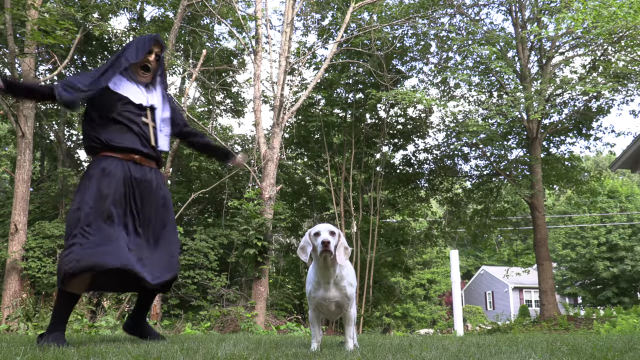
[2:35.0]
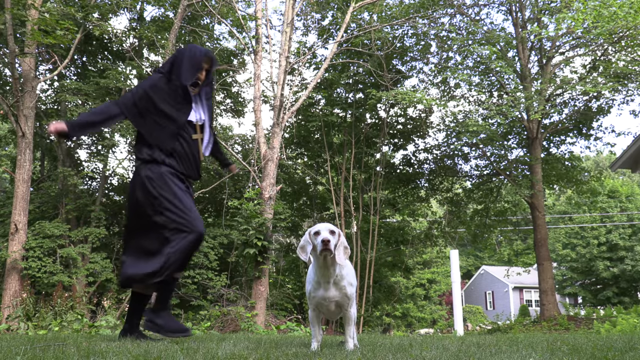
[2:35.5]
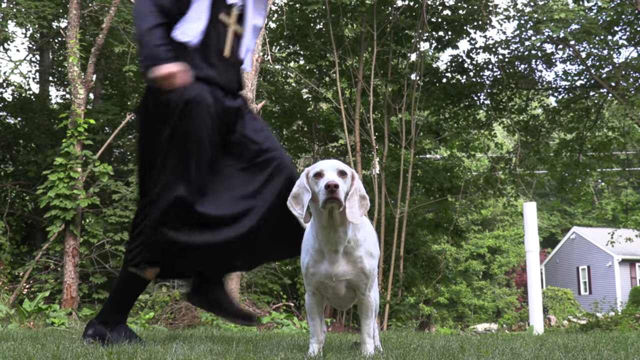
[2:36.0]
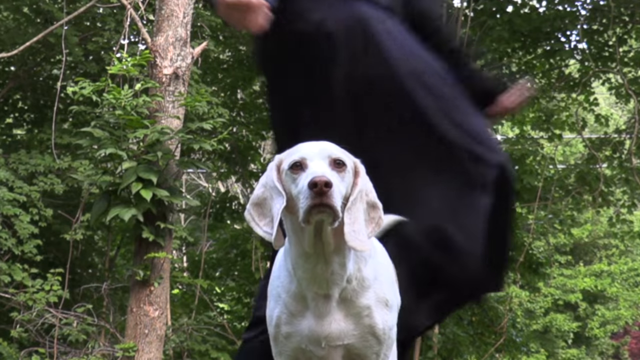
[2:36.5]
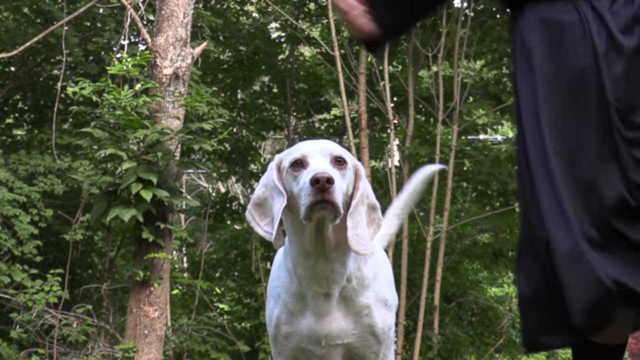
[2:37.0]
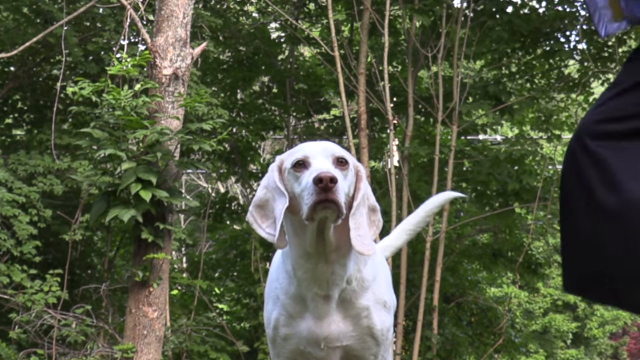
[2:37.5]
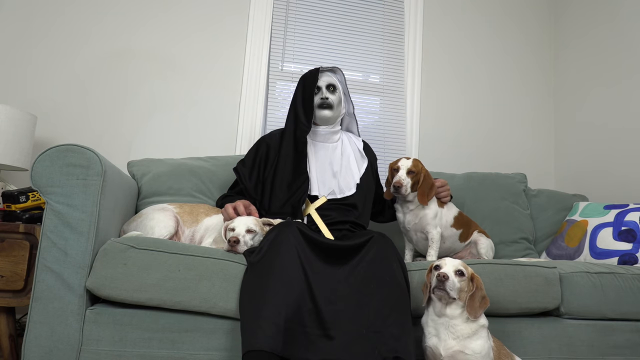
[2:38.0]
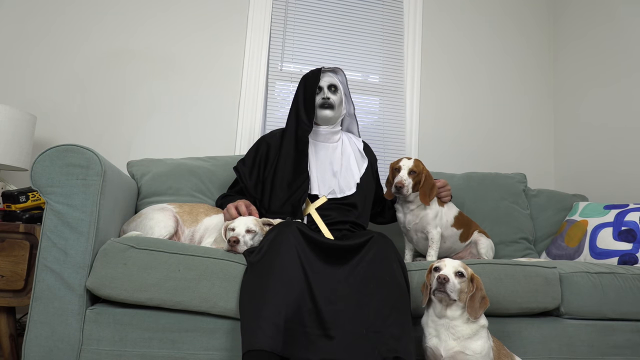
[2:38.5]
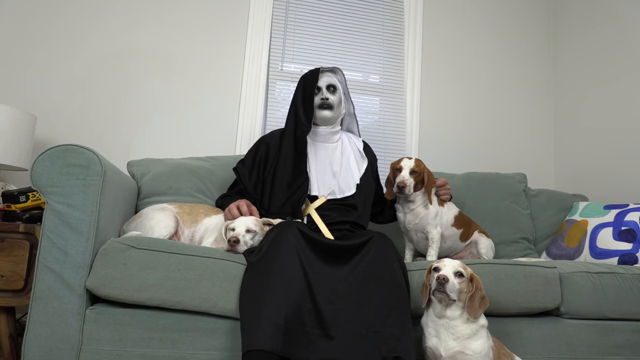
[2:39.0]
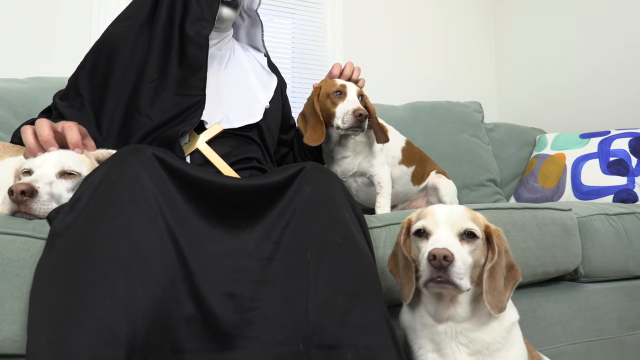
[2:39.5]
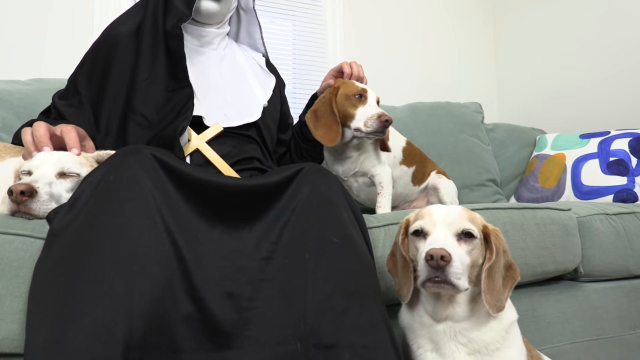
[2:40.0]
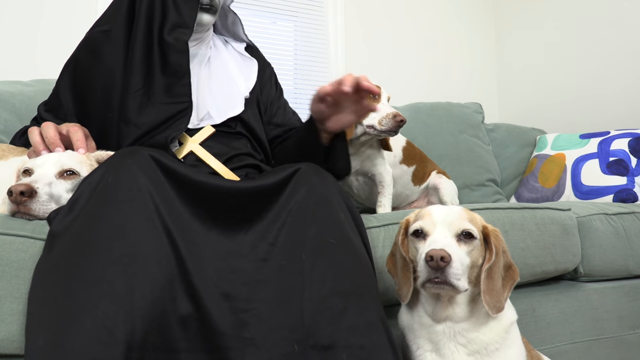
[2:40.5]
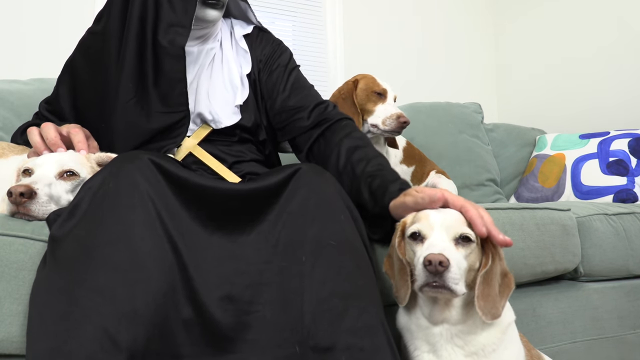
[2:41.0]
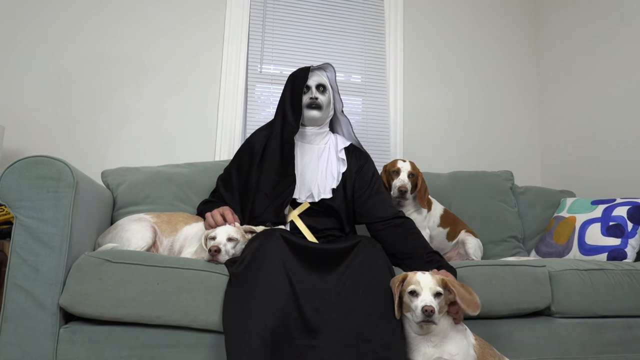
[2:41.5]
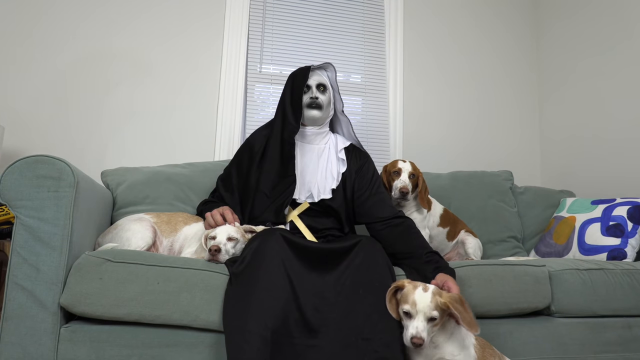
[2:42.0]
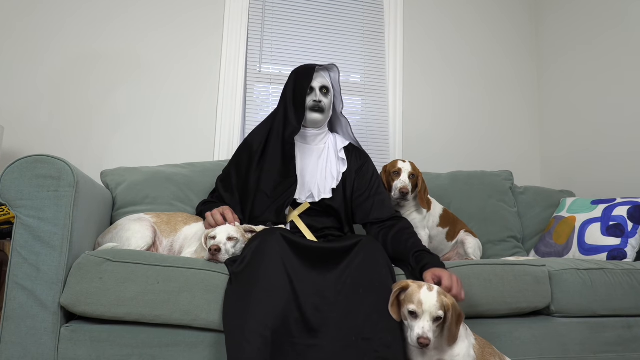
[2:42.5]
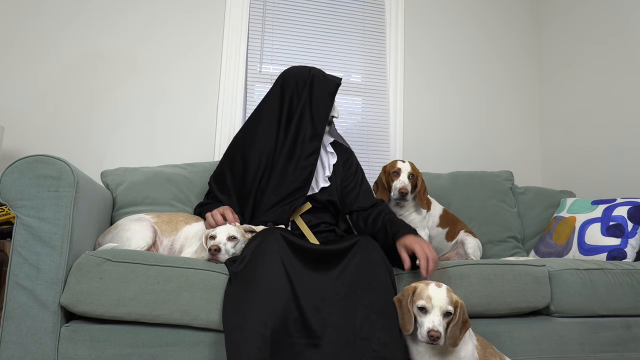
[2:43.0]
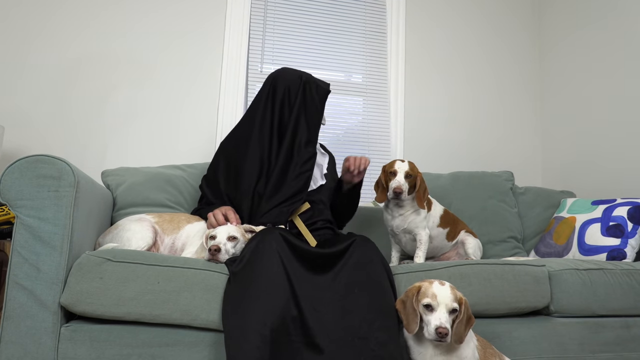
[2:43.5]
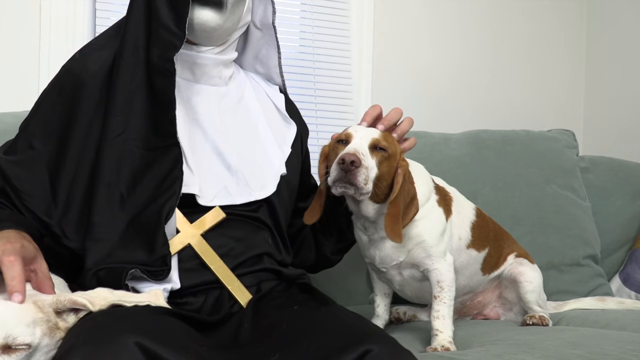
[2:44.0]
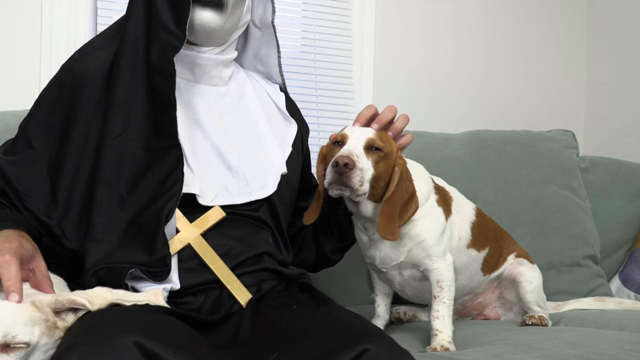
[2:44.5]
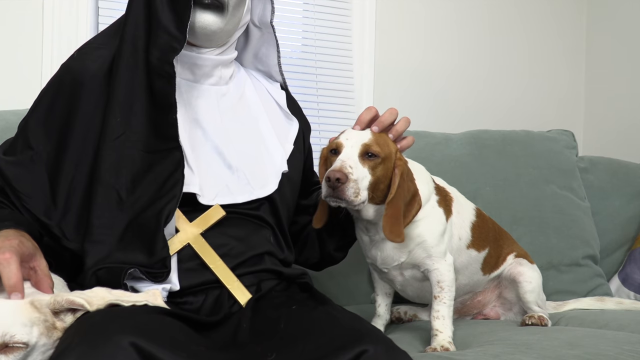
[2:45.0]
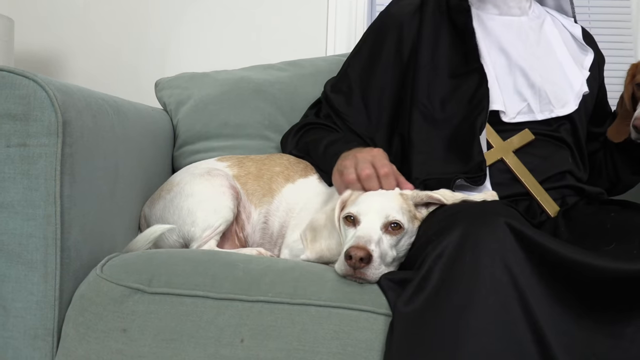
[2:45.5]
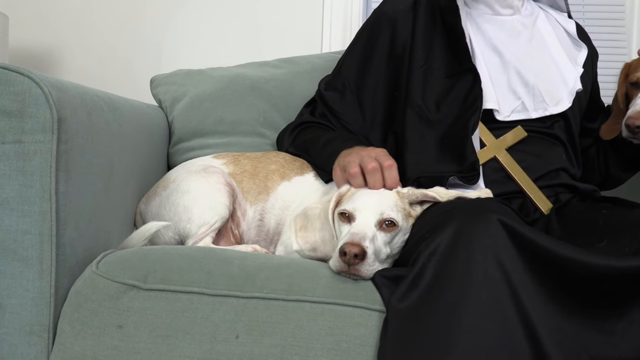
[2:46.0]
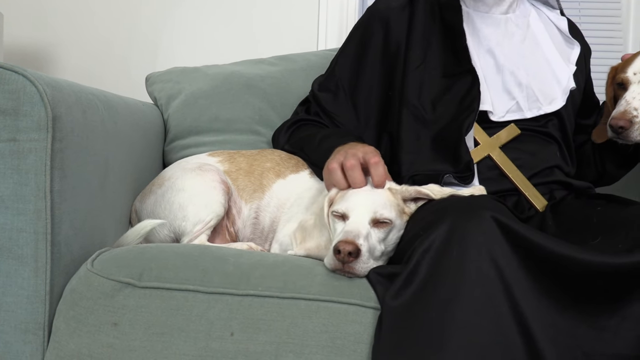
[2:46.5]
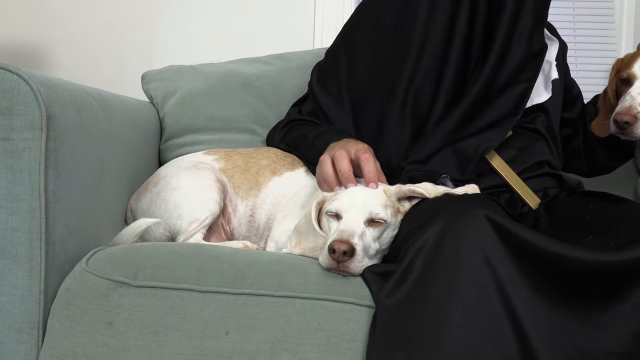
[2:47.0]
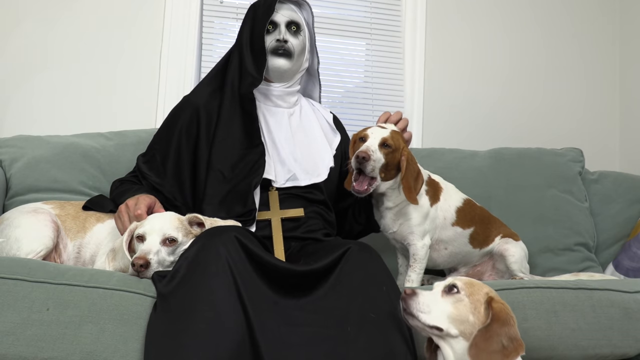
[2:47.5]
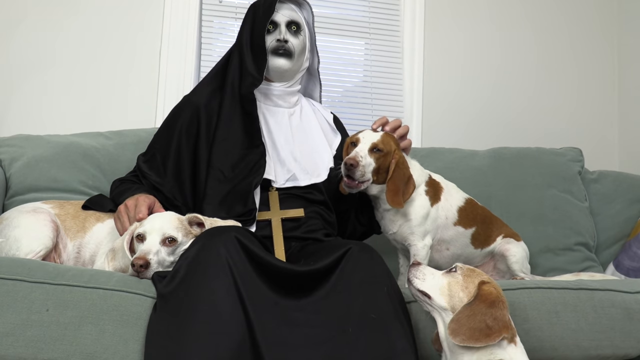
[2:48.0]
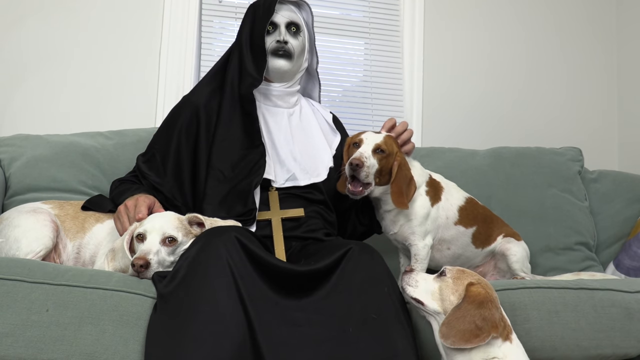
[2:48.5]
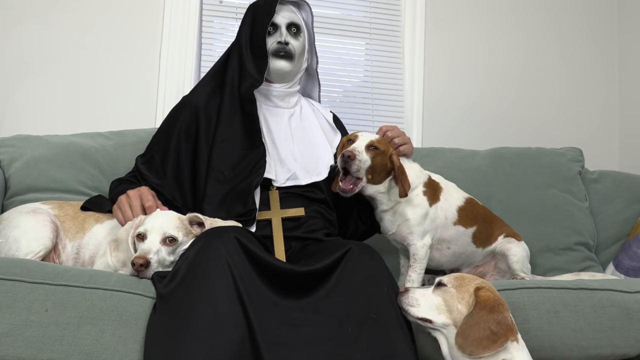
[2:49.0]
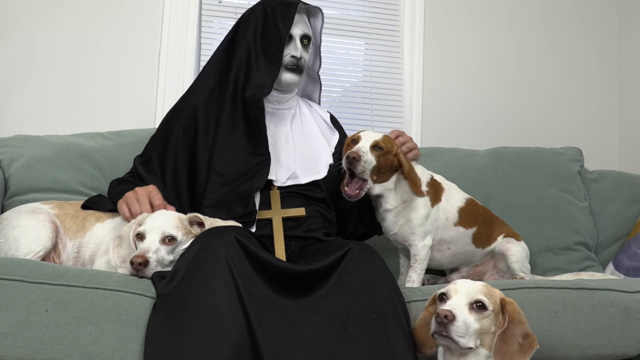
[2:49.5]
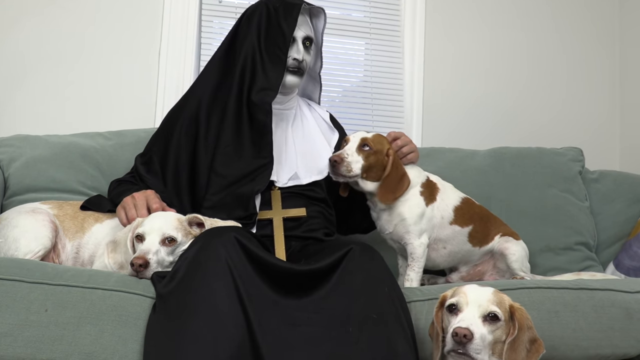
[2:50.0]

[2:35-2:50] The demon nun continues to dance, prance and skip around the dog in celebration of getting the ball in the net. The final scene returns to the house on the green sofa. The dog with white ears is lying with his eyes closed, resting his head on the nun's lap. The nun is sitting and petting two dogs: the dog with dark brown ears sits to the right of the demon nun, and the dog with light brown ears sits on the floor, as the demon nun alternates his hands and petting motions for each dog. The video ends abruptly on the green couch.